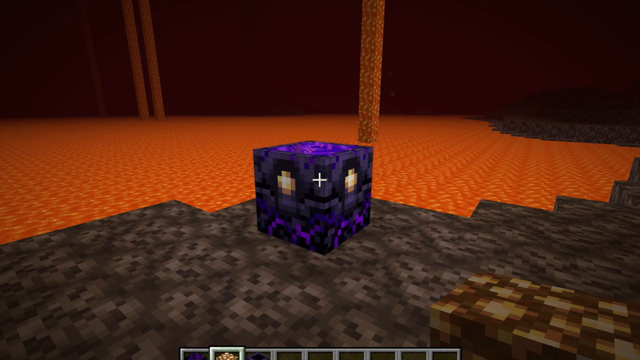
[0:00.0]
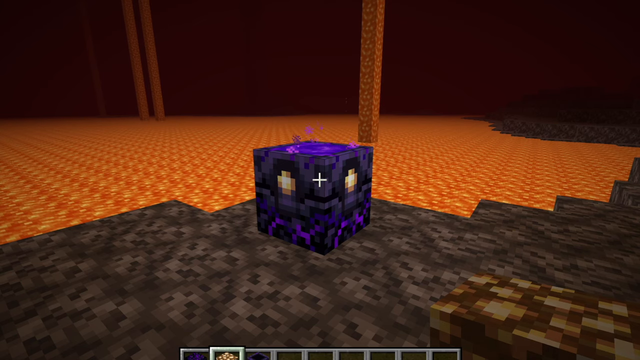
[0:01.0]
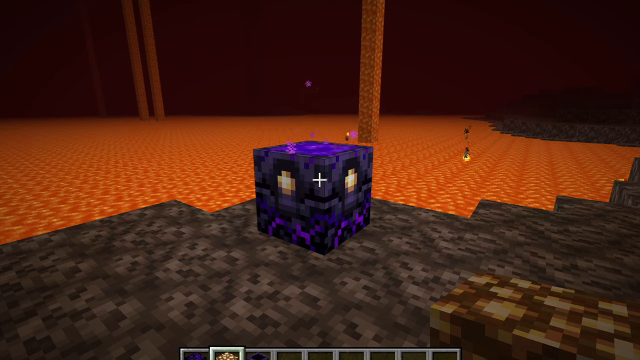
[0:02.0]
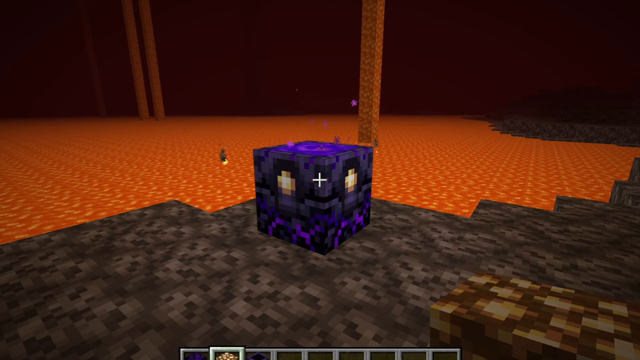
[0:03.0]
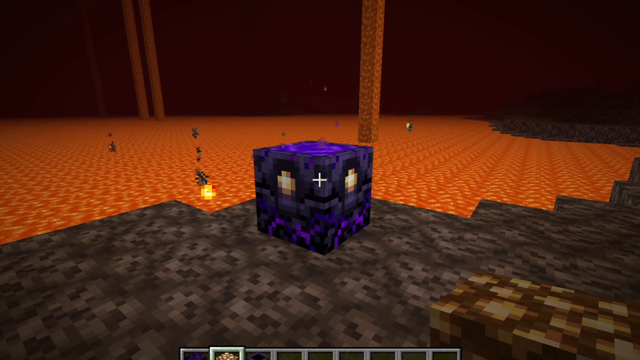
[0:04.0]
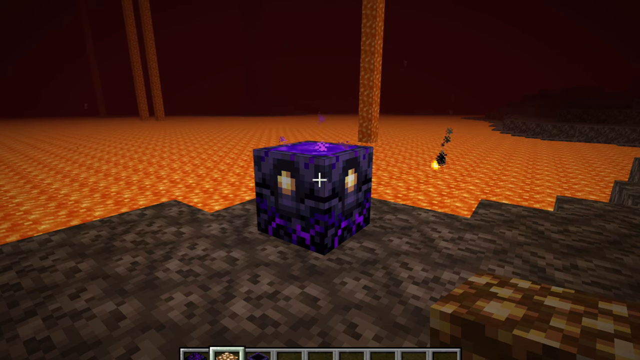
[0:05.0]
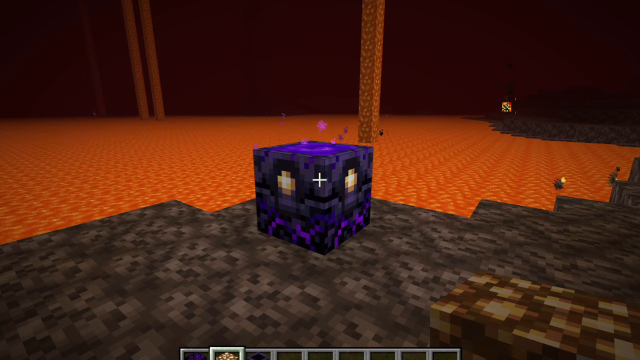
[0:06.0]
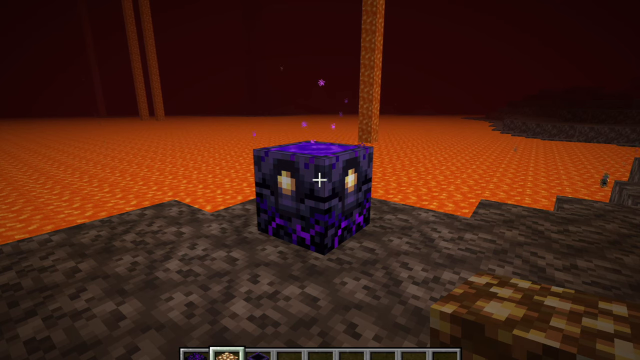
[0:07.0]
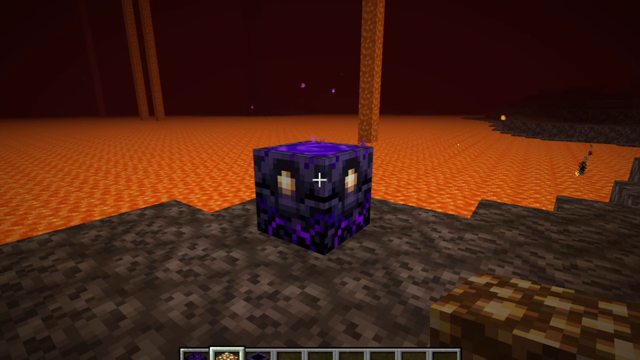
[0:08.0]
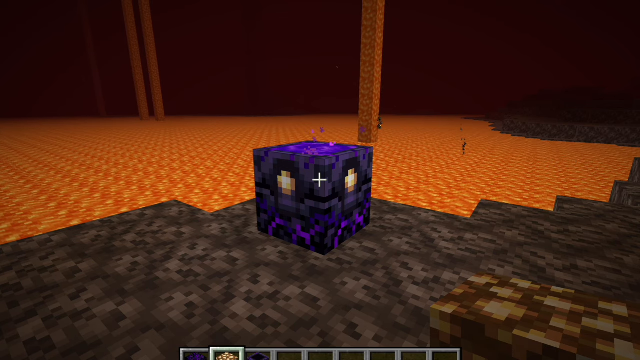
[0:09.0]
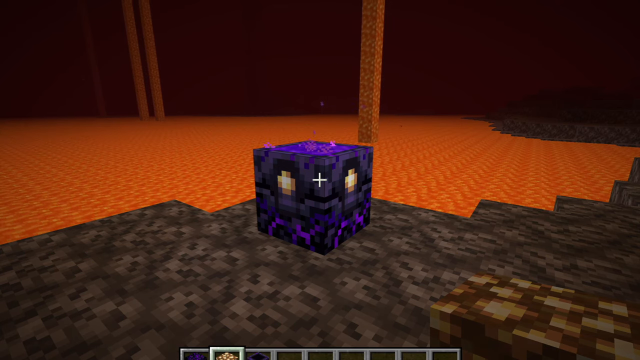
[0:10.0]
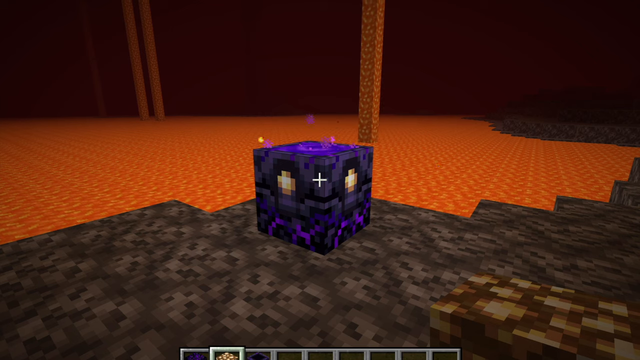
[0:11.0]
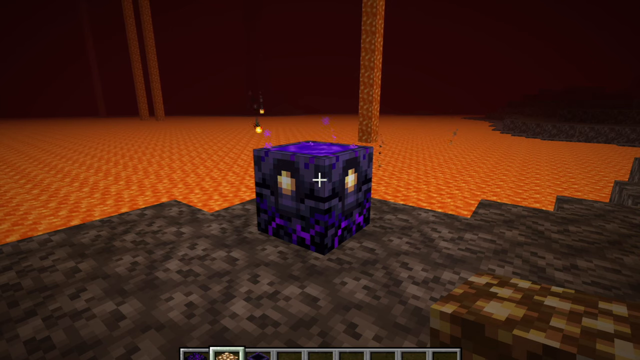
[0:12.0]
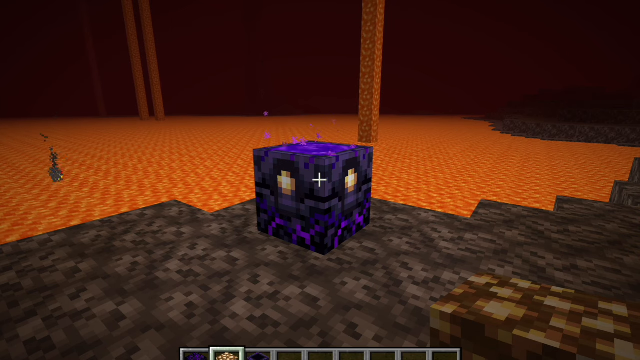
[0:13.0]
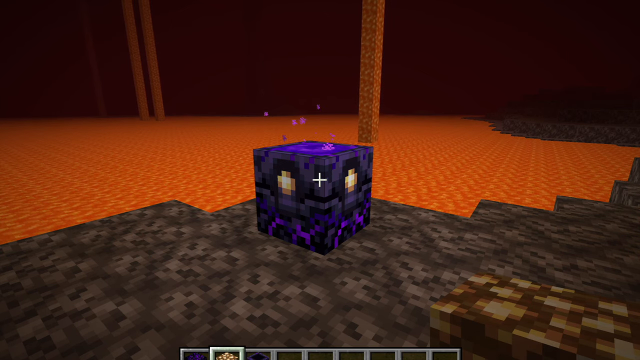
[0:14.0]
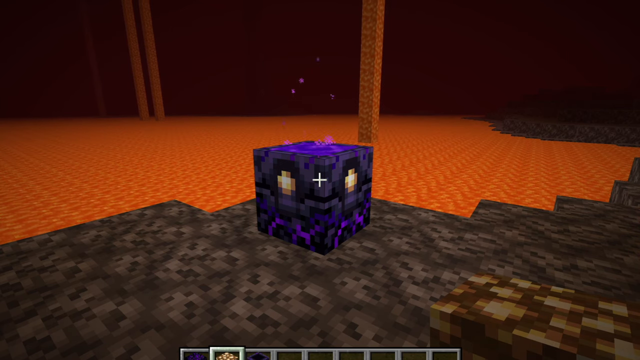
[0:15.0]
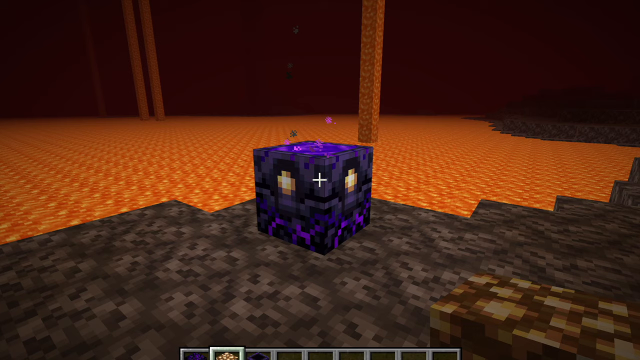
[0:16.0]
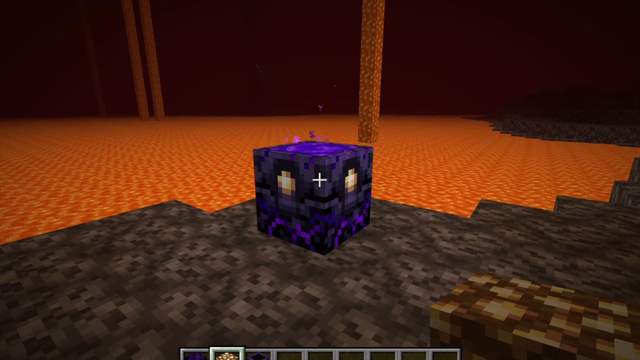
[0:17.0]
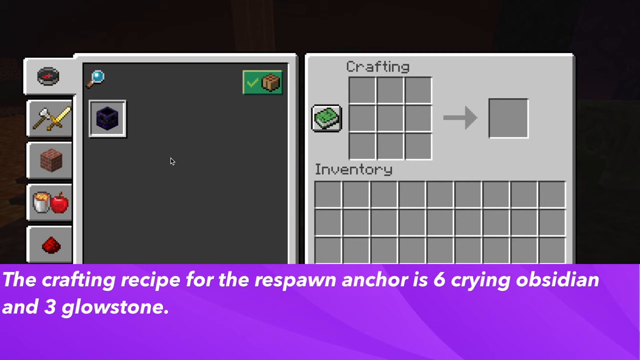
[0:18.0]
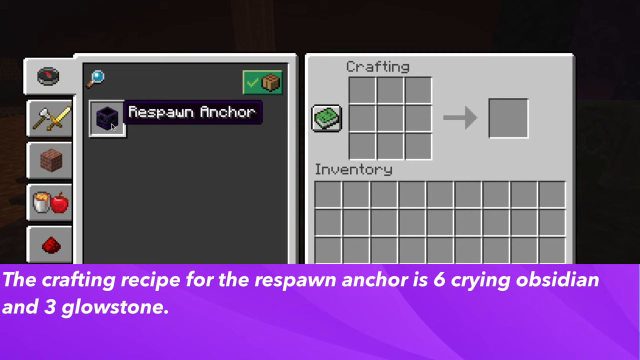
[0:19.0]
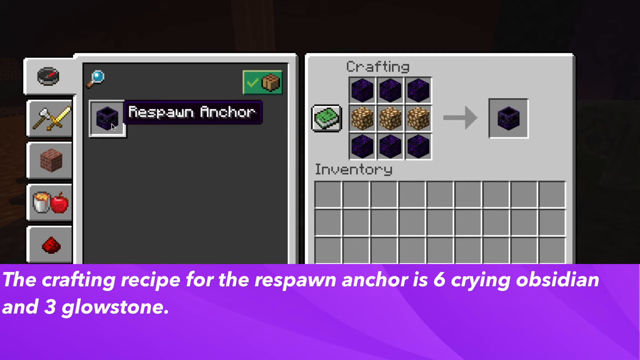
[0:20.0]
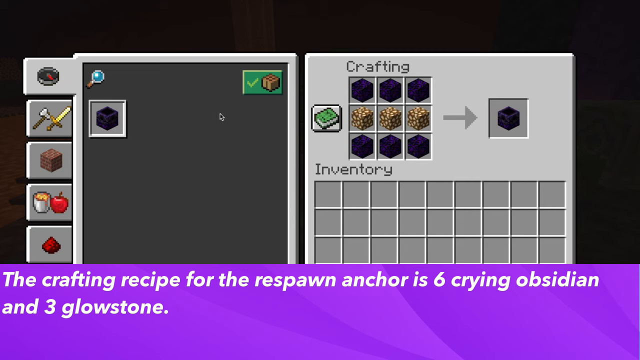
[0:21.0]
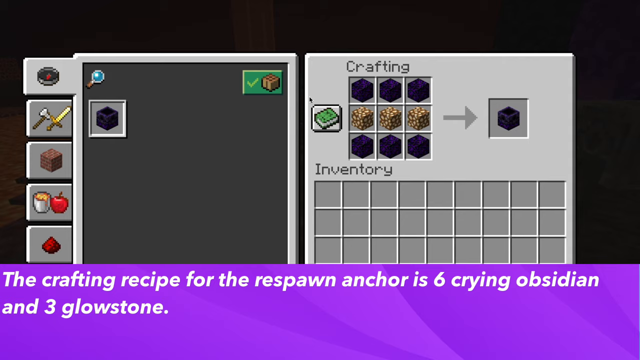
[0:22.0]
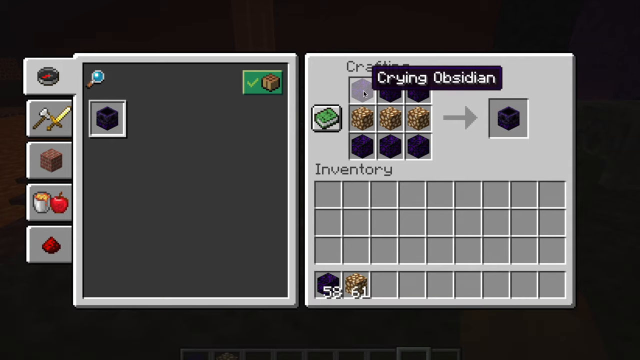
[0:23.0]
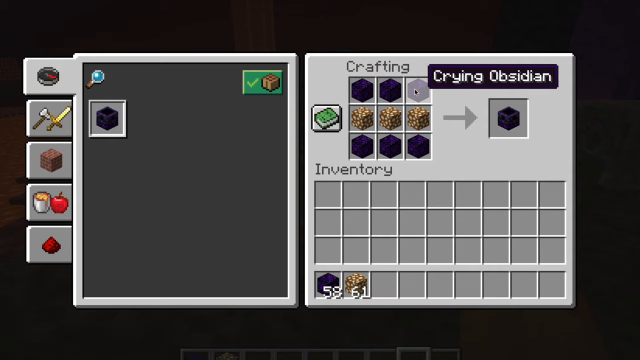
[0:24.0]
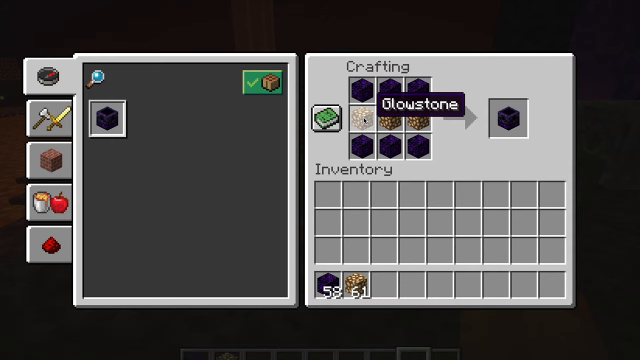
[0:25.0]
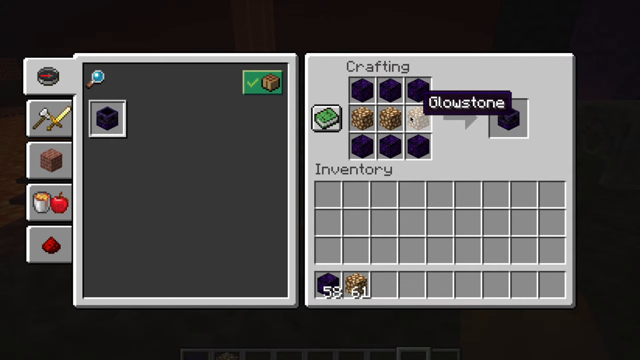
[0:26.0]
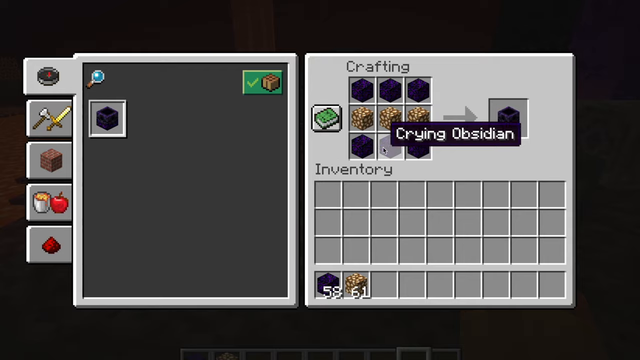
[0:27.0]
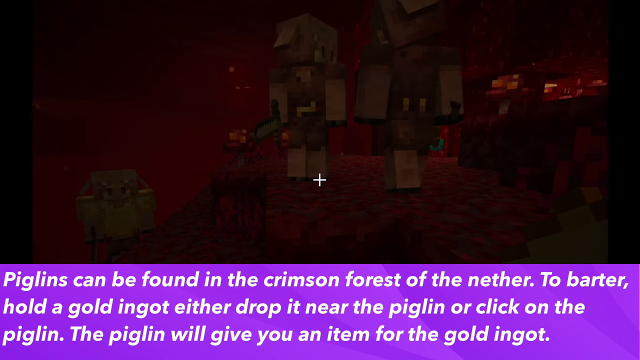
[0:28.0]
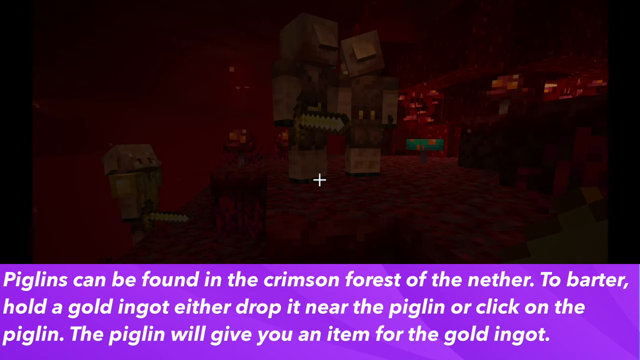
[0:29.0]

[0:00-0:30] The video appears to be from a video game. The scene is a space with a box in the middle of the screen that has purplish and blue tones. On-screen text reads "the crafting recipe for the respawn anchor is six crying obsidian and three glowstone." A display then appears involving the glowstone and the crying obsidian, and text reads "piglins can be found in the crimson forest of the nether" and "to barter, hold a gold ingot, either drop it near the piglin or click on the" piglin, followed by "the piglin will give you an item for the gold ingot." Not all of the words can be made out. The room has a completely black background and a bright orange floor with a pattern in it; in the foreground the bright orange gives way to a brown.